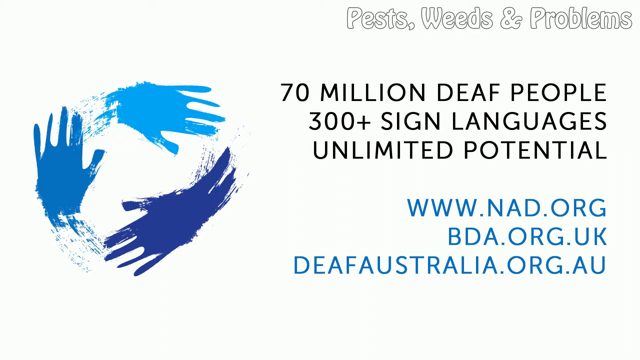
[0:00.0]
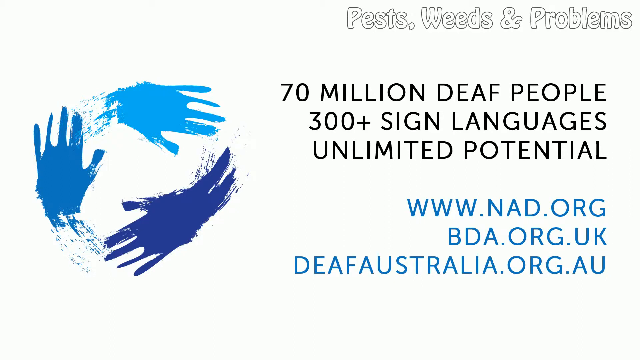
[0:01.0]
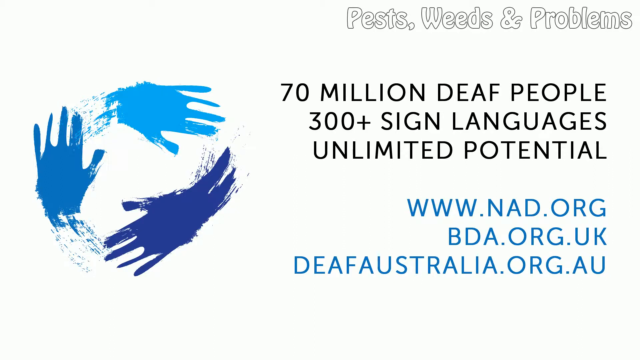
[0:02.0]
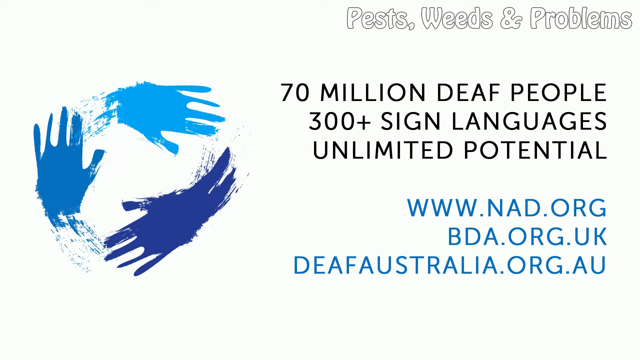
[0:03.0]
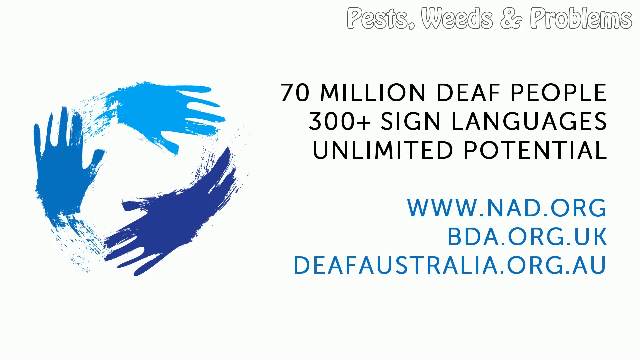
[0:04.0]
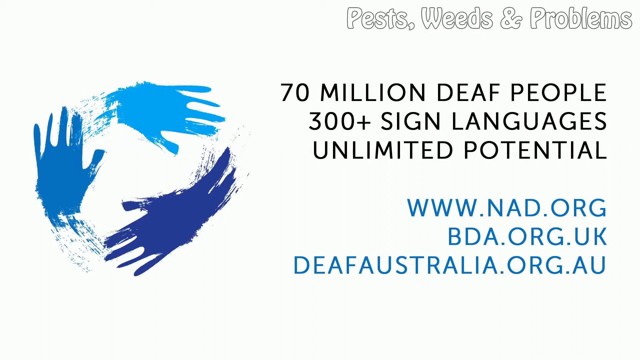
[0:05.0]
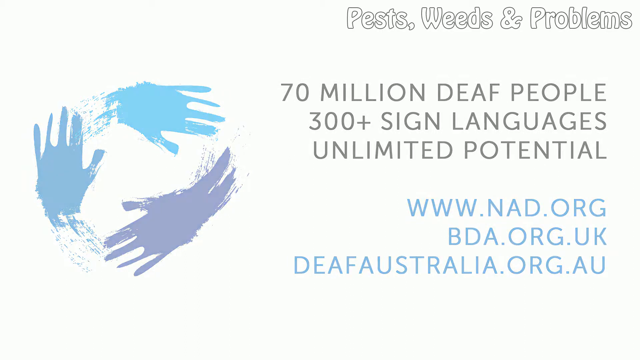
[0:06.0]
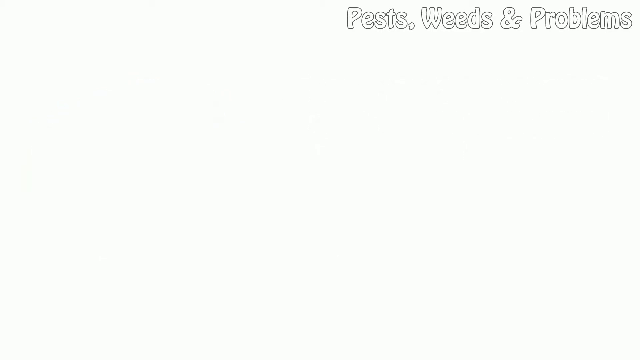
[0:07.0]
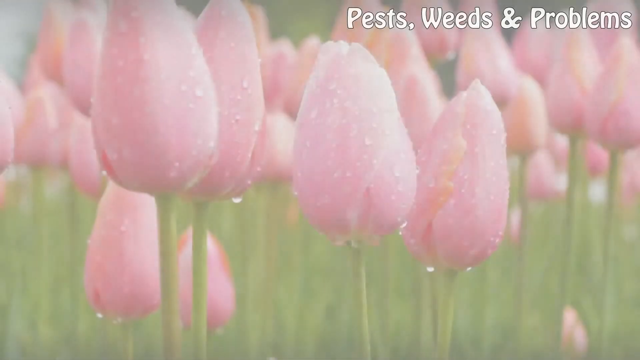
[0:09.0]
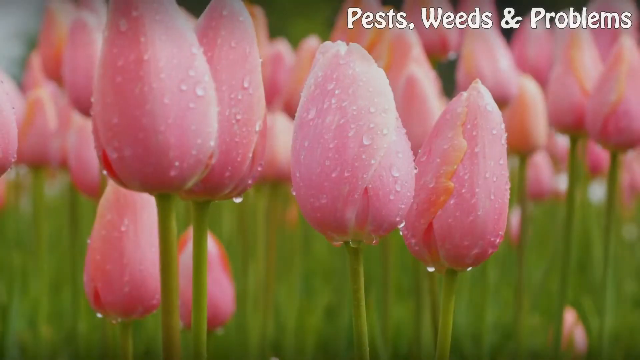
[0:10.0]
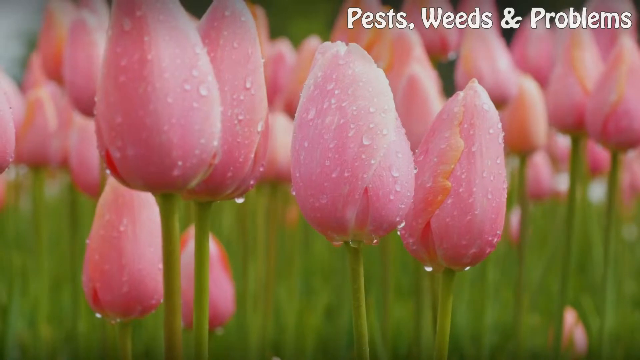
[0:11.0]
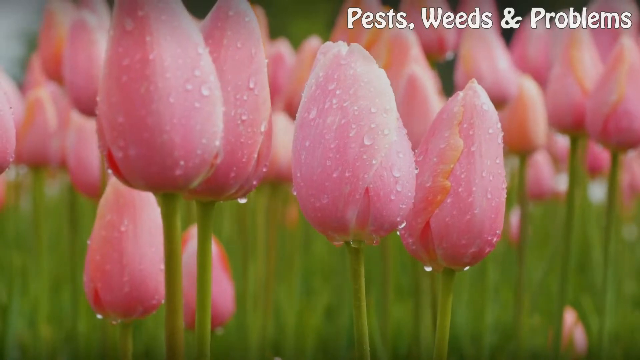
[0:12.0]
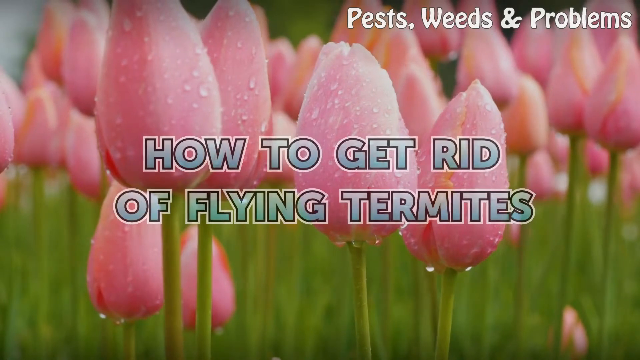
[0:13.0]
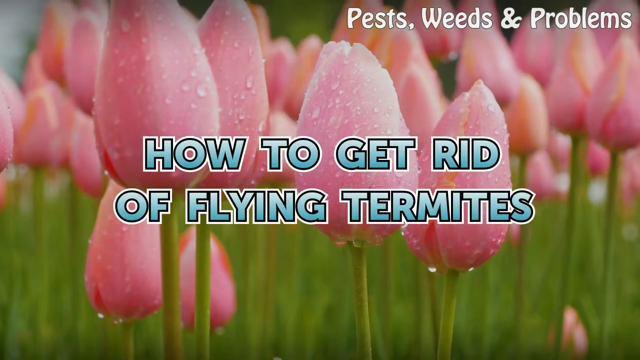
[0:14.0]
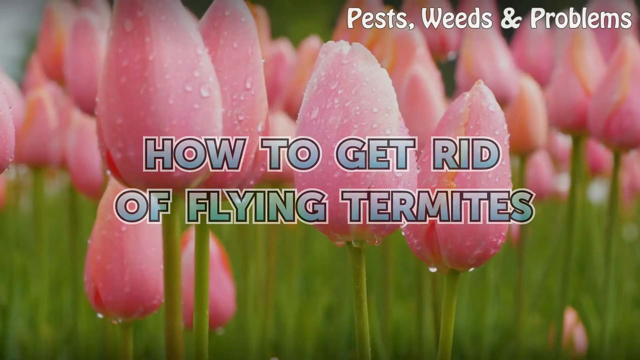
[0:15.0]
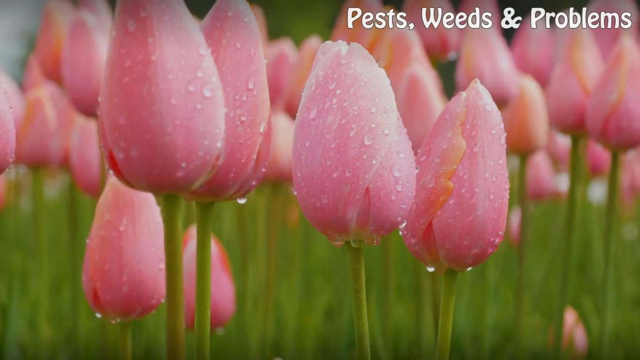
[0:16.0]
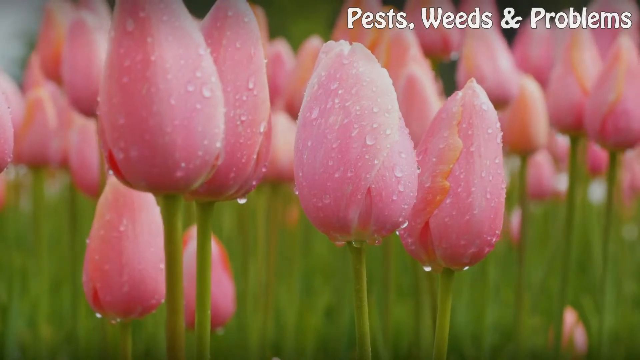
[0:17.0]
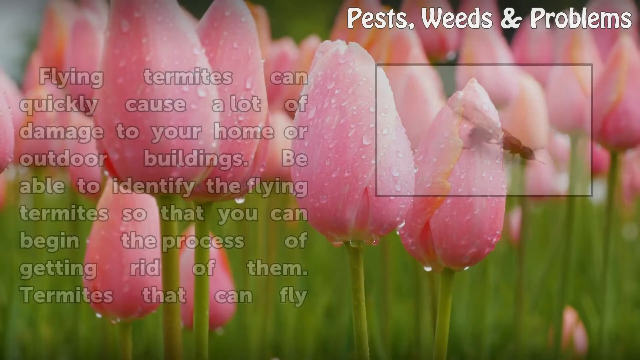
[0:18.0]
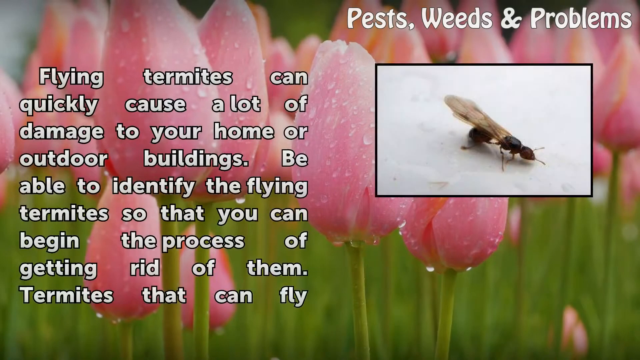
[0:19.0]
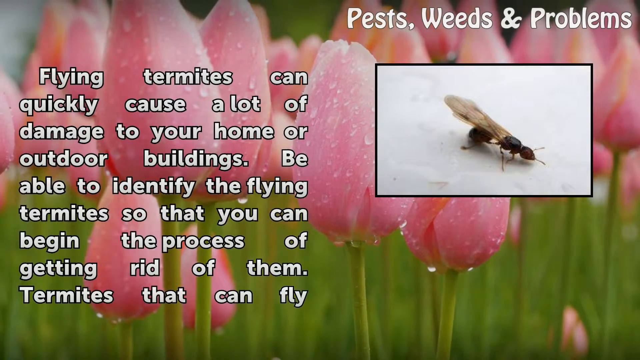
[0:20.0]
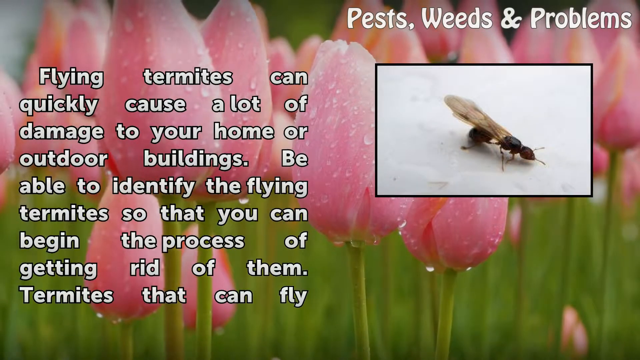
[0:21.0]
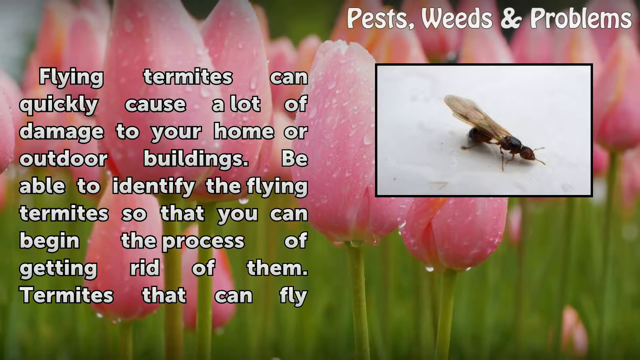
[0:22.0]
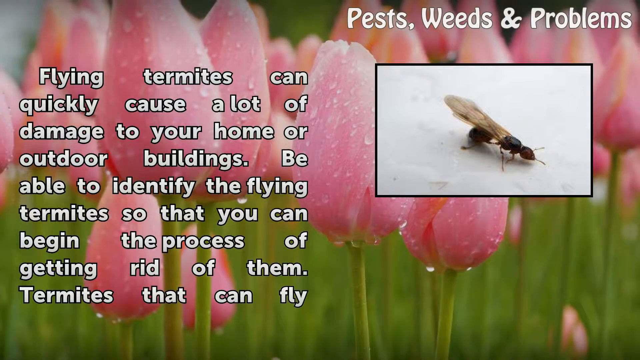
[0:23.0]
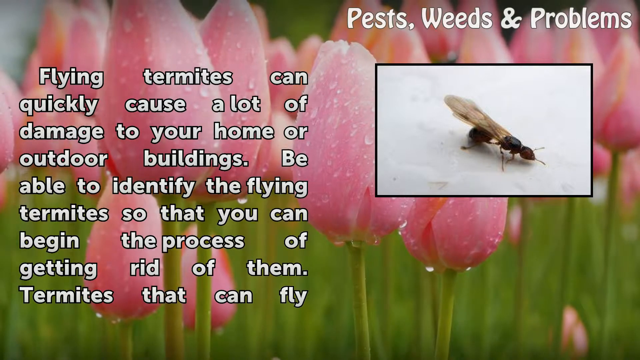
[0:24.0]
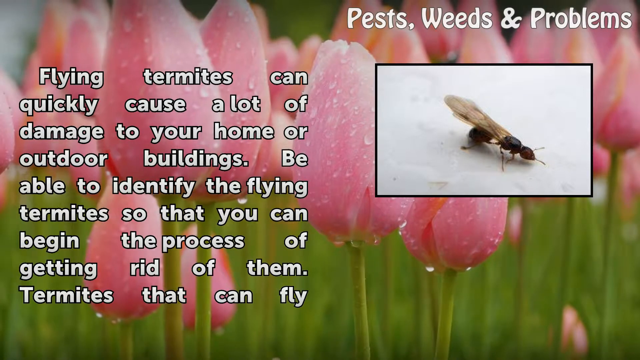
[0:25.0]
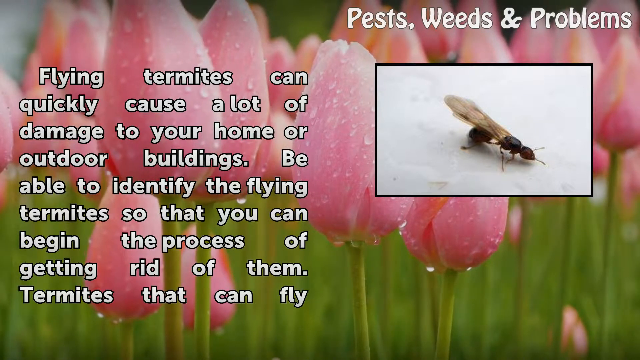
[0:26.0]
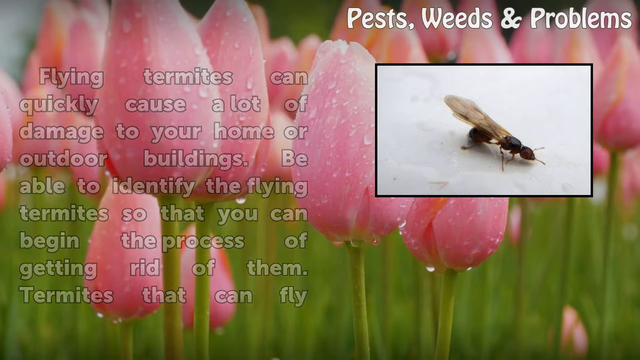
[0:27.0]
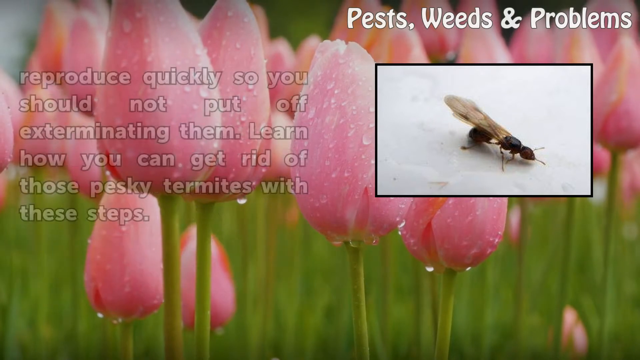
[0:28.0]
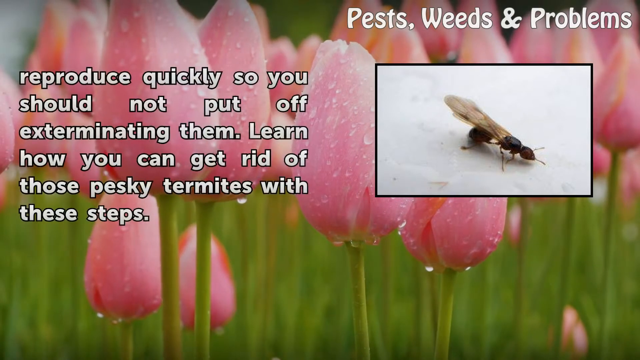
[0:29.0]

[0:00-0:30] The video opens with a full-page graphic on a white background. On the left side of the screen is a logo made of three handprints in different shades of blue that form a circle. On the right side of the frame, a caption in black reads "70 million deaf people, 300 plus sign languages, unlimited potential." Underneath, in blue, are web addresses: first "www.nad.org", then "bda.org.uk", and under that "deafaustralia.org.au". At the top, in a completely different font, a heading reads "Pests, weeds and problems." The graphic stays on screen for six seconds, then fades away and is replaced by a shot of tulips waving in the breeze. They are growing in a field and are covered in raindrops. A title appears over them in a bold, fully capitalised font, with a white outline, a black outline inside that, and an ombre blue effect inside each letter; it reads "How to get rid of flying termites." The title fades and is replaced by text on the left side of the screen and a picture of a termite on the right side, with a black box around the edge of the picture. The text reads: "Flying termites can quickly cause a lot of damage to your home or outdoor buildings. Be able to identify the flying termites so that you can begin the process of getting rid of them. Termites that can fly. Reproduce quickly, so you should not put off exterminating them. Learn how you can get rid of those pesky termites with these steps."